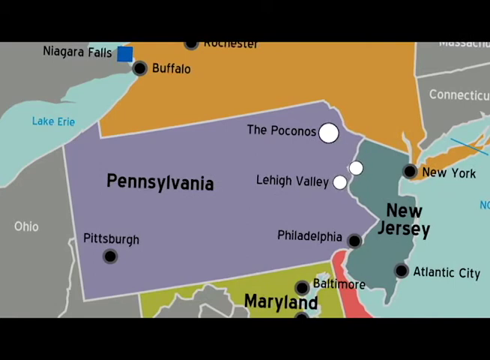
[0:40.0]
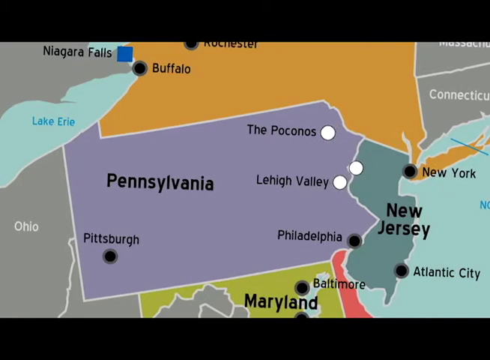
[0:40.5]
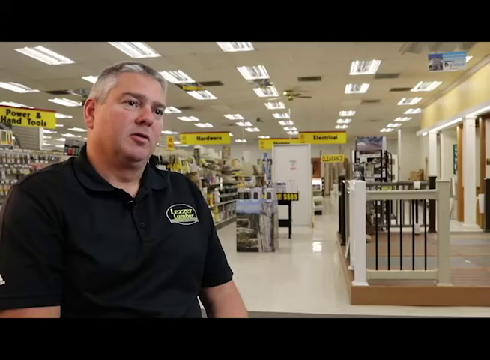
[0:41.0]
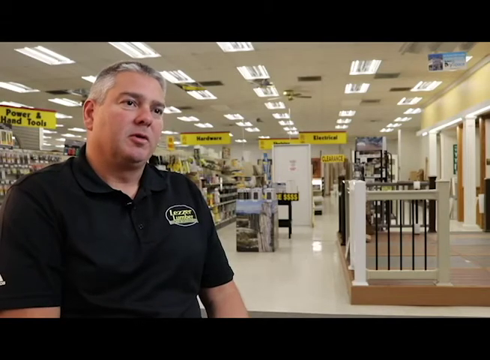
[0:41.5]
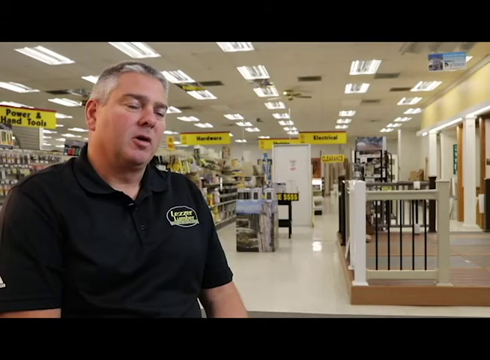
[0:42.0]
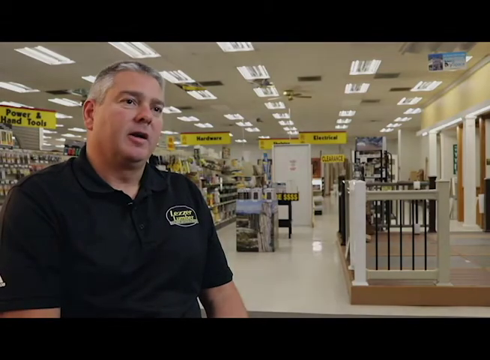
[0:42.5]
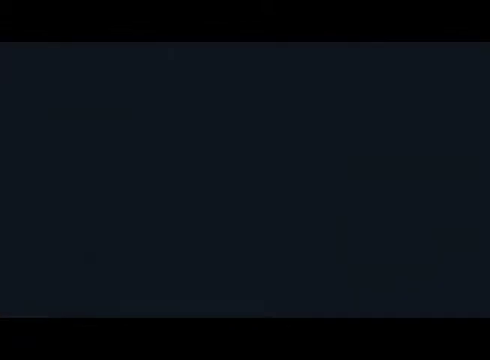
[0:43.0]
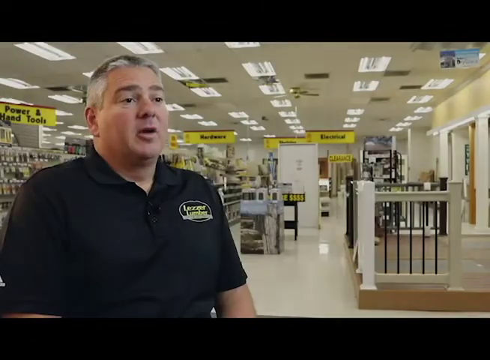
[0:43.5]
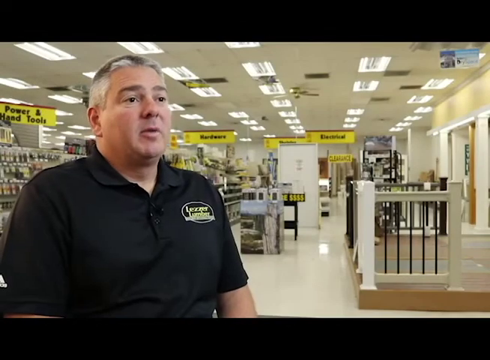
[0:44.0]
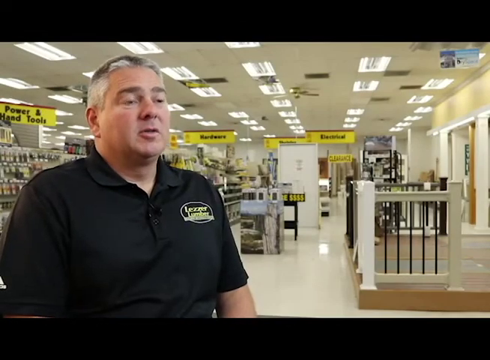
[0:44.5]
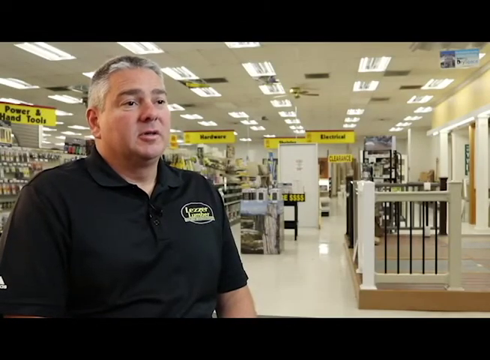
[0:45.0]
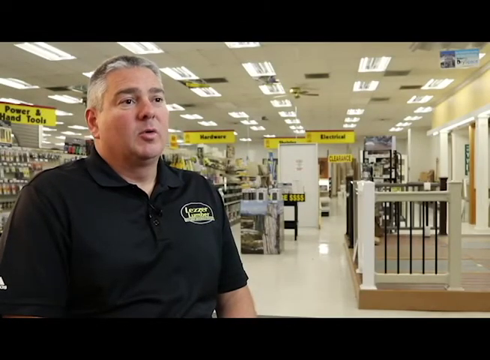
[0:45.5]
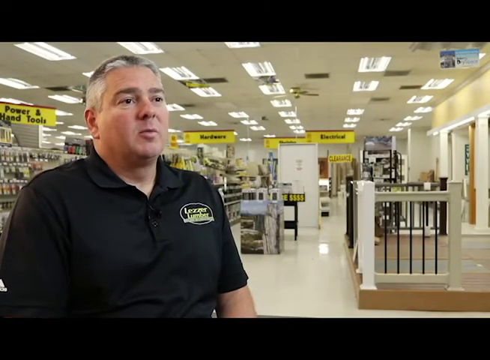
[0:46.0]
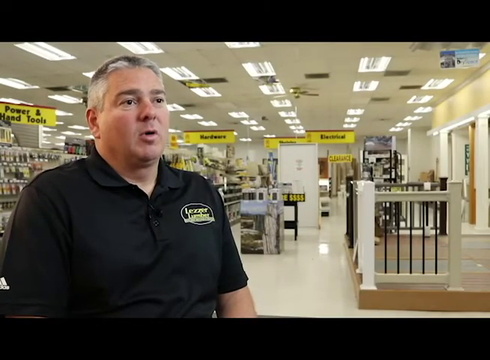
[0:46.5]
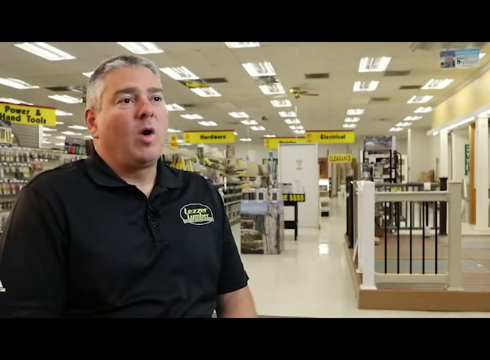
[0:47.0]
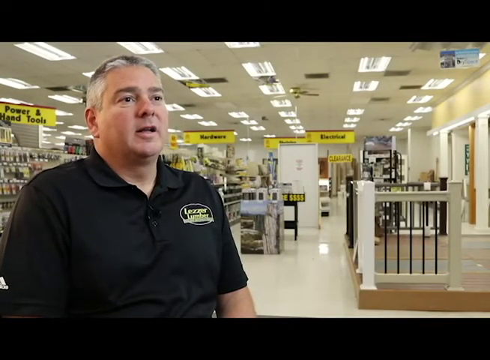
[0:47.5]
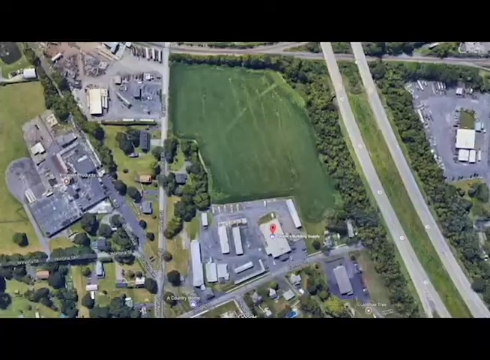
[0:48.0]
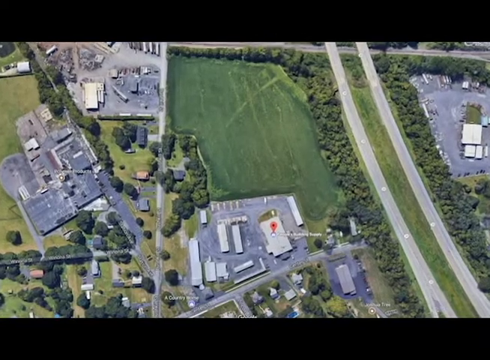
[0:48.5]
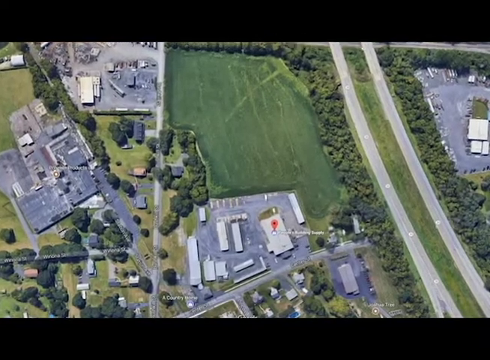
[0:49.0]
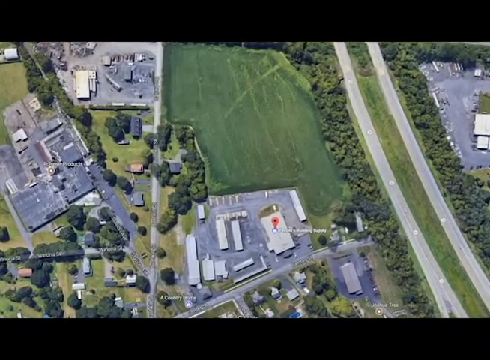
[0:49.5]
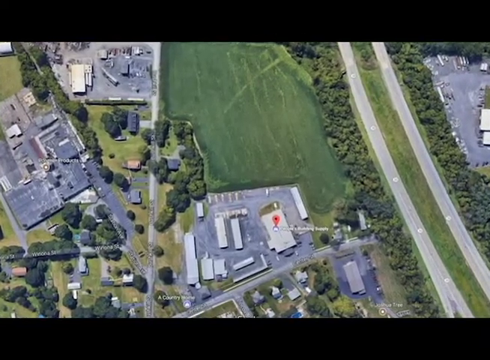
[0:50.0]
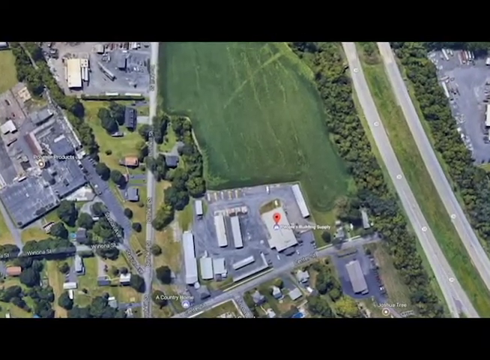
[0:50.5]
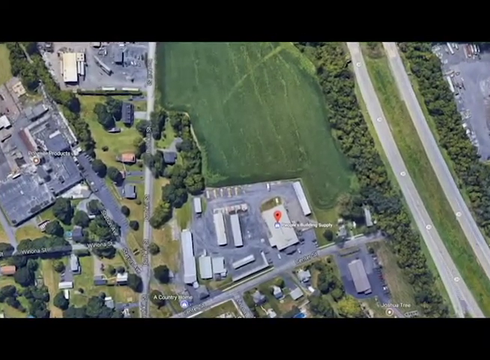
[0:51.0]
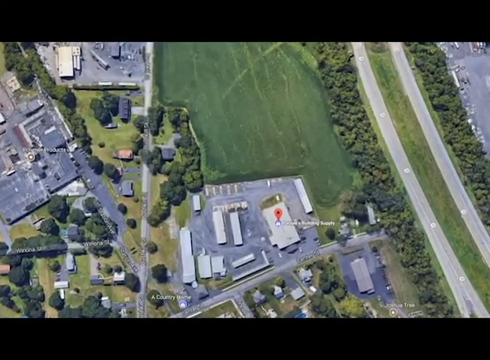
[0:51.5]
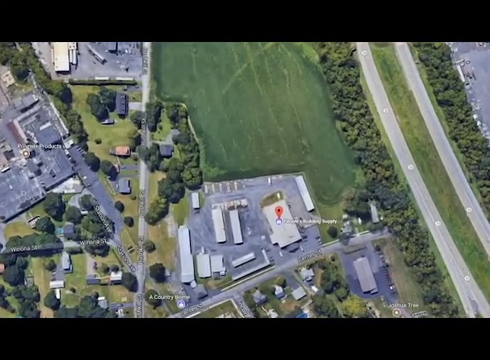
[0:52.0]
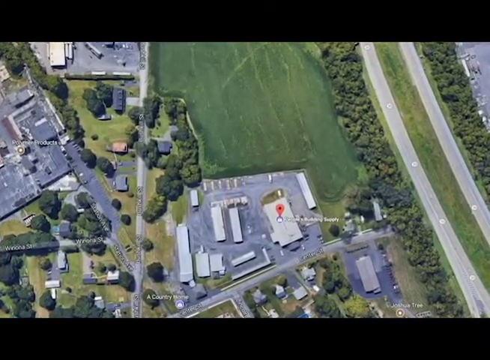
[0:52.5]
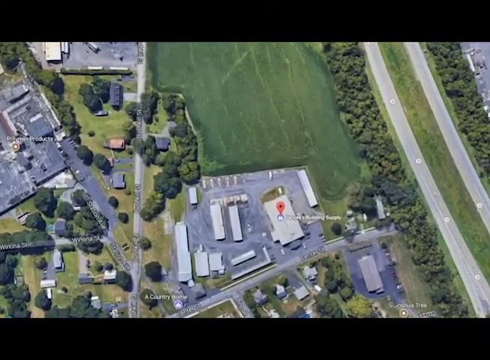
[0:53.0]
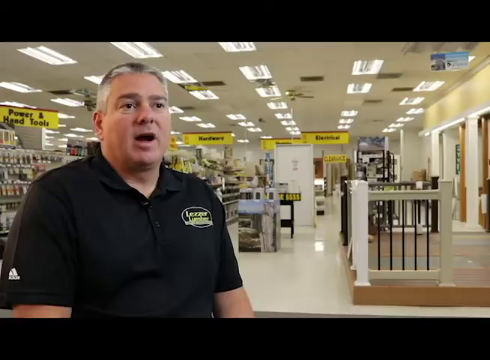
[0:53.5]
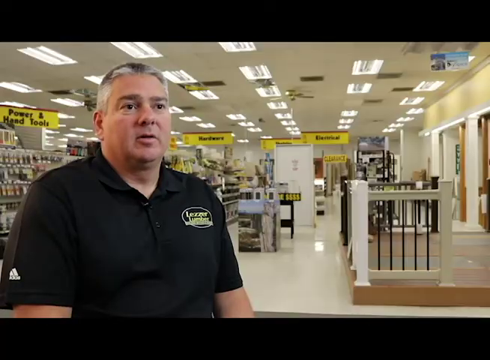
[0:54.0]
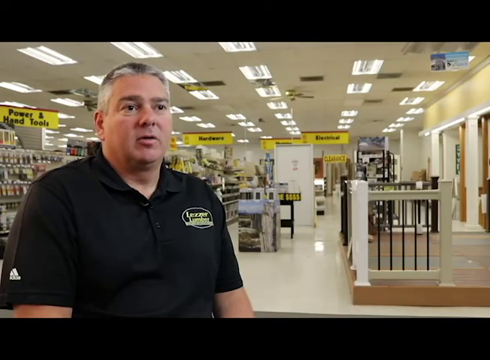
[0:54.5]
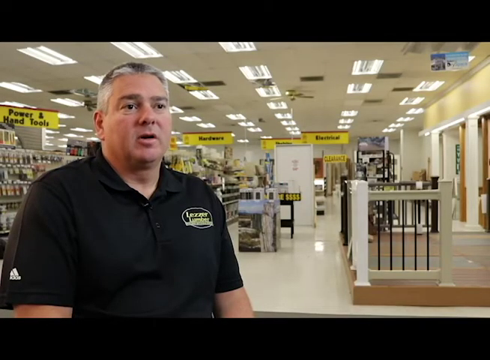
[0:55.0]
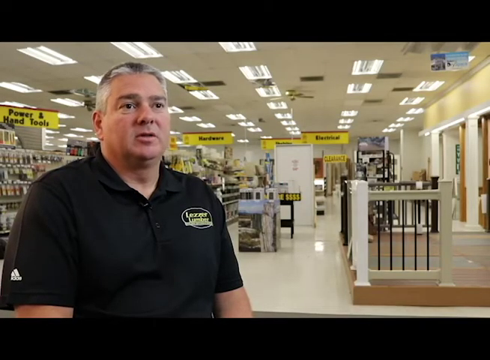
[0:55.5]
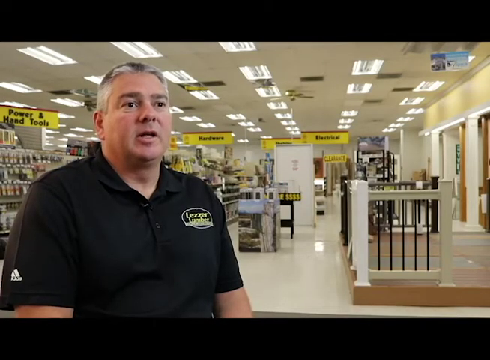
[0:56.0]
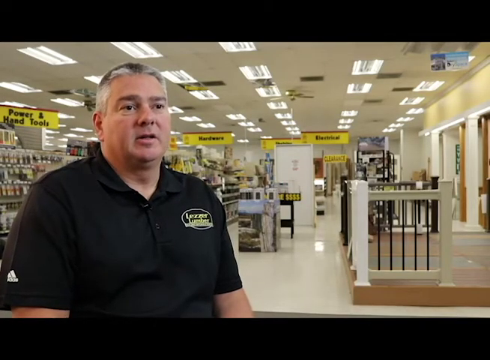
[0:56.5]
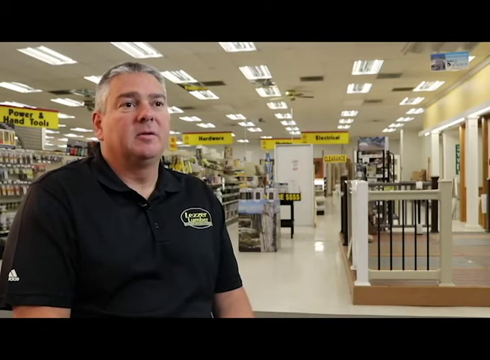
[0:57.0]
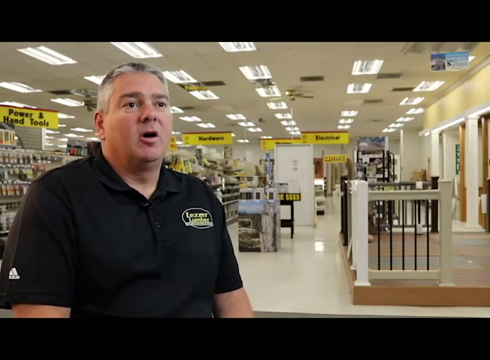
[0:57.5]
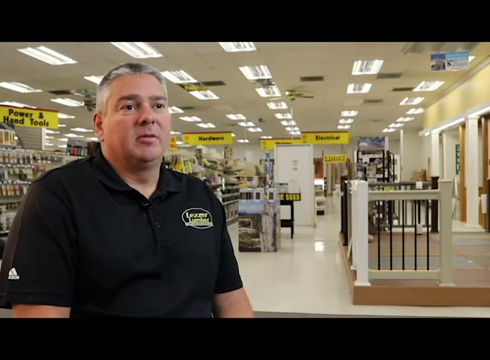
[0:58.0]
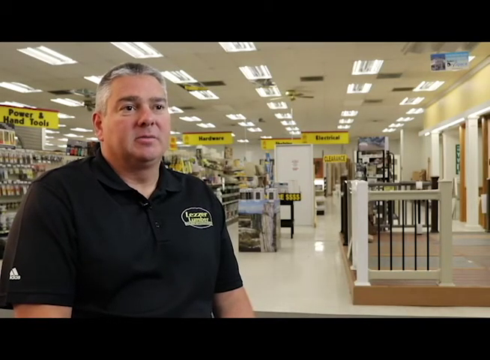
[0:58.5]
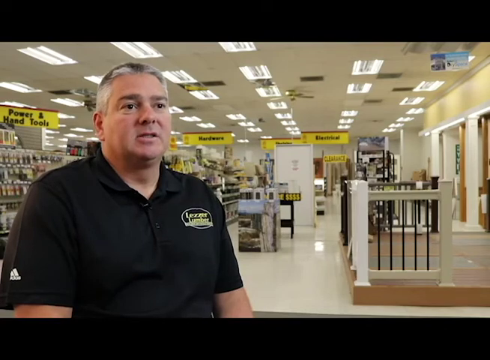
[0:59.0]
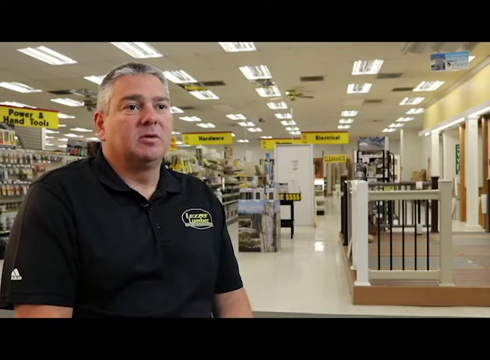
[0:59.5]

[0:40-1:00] The map is shown zoomed in mostly on Pennsylvania, but also showing New Jersey and New York. The video goes back to the man in the short-sleeved black shirt with a logo on it, standing and talking inside the store. Lights are visible on the ceiling, and to the right is a raised area with a brown floor that can be stepped up on. The screen changes but then goes back to him. The next screen shows an aerial view of multiple buildings that looks like a shot from Google Maps or another maps app. To the right are two highways, and land, bushes and trees are also visible. The video then returns to the man in the store, who is talking to the person off camera.